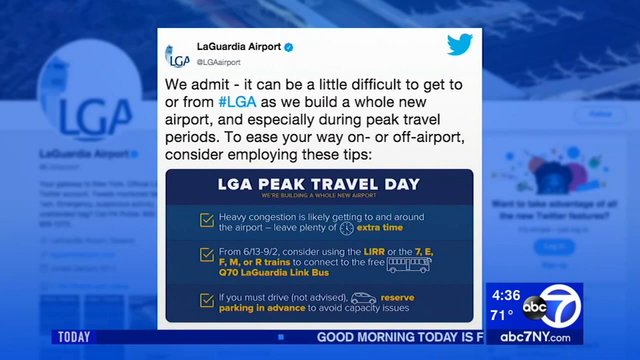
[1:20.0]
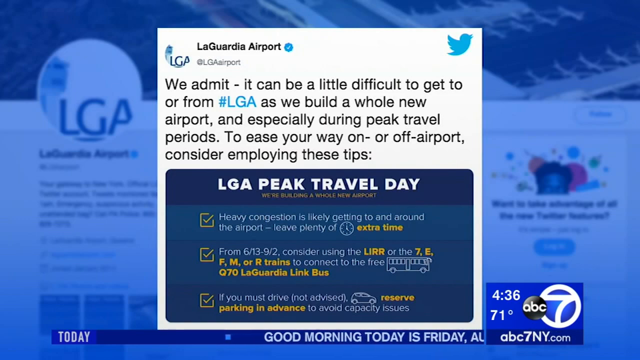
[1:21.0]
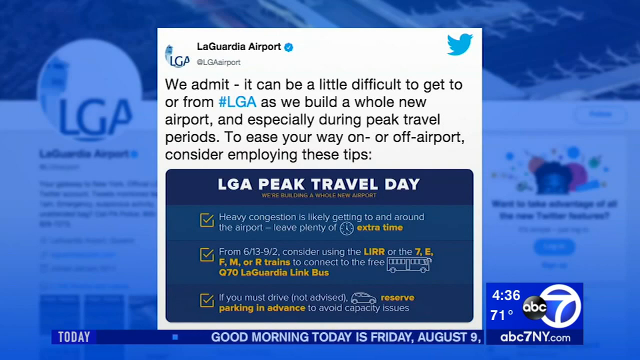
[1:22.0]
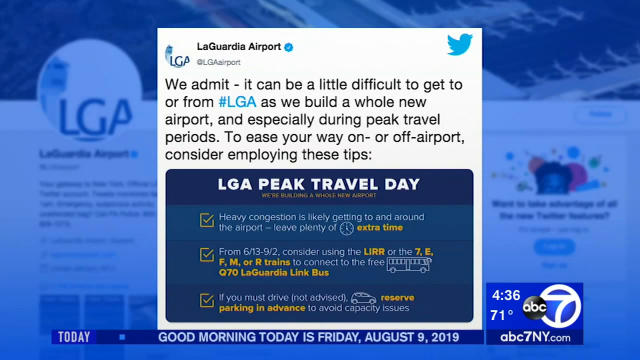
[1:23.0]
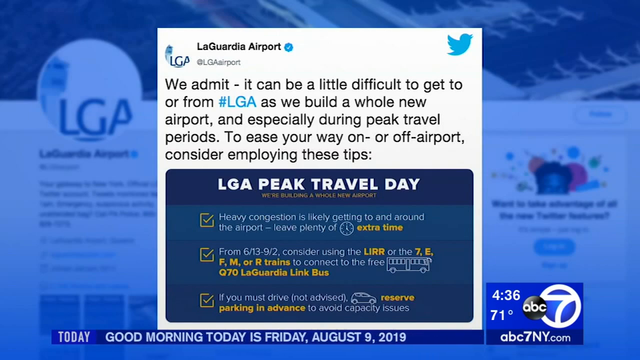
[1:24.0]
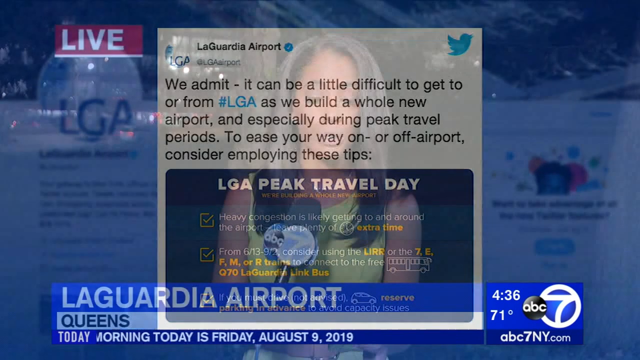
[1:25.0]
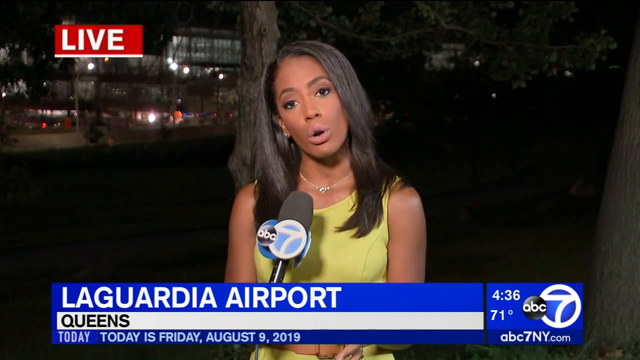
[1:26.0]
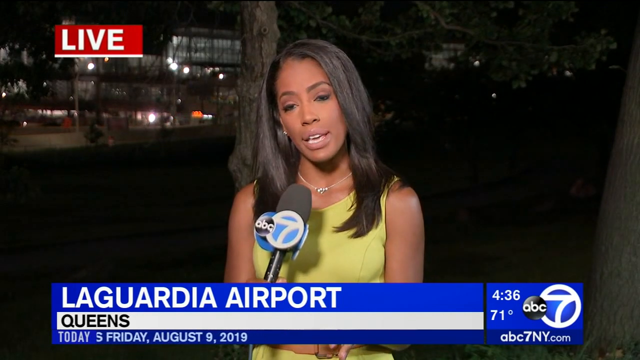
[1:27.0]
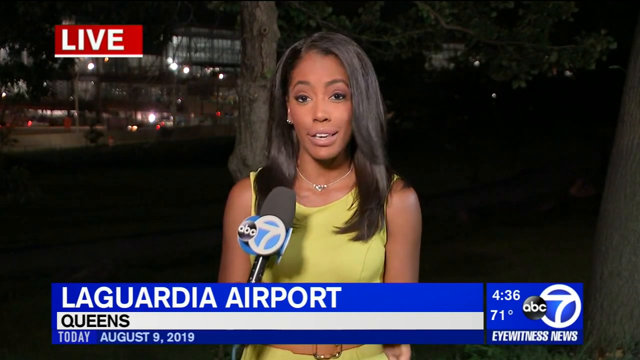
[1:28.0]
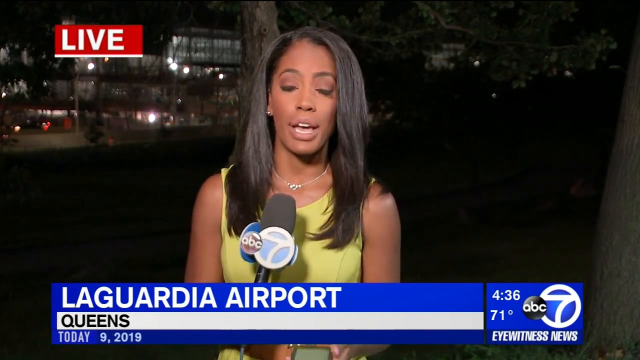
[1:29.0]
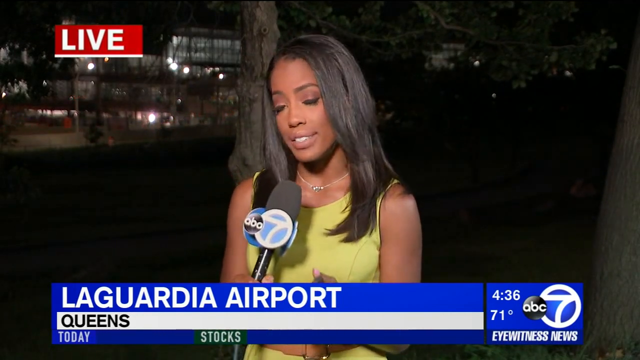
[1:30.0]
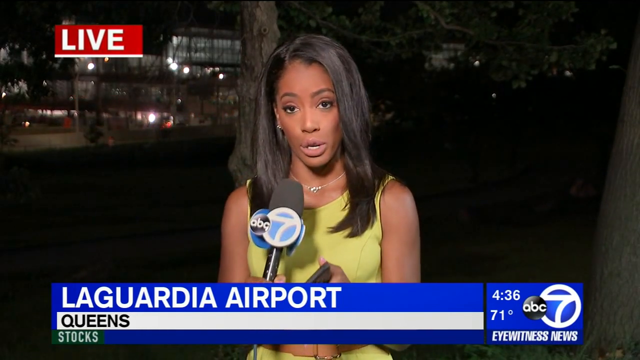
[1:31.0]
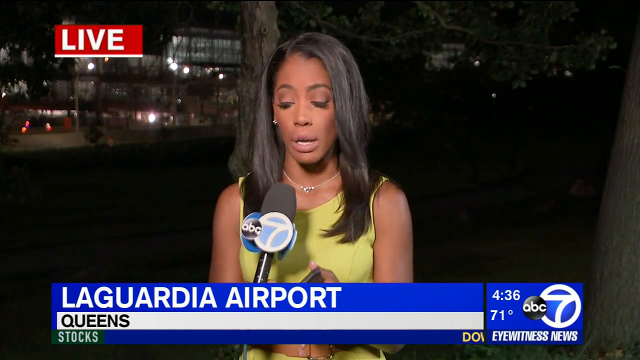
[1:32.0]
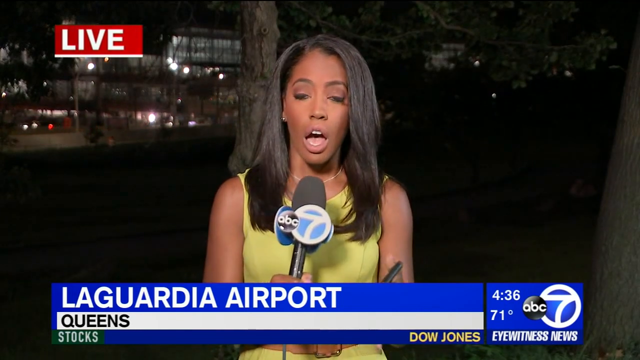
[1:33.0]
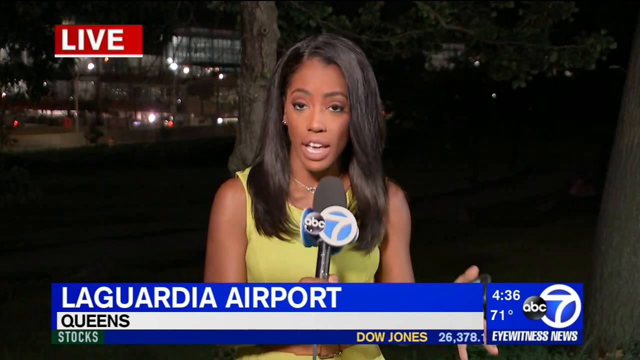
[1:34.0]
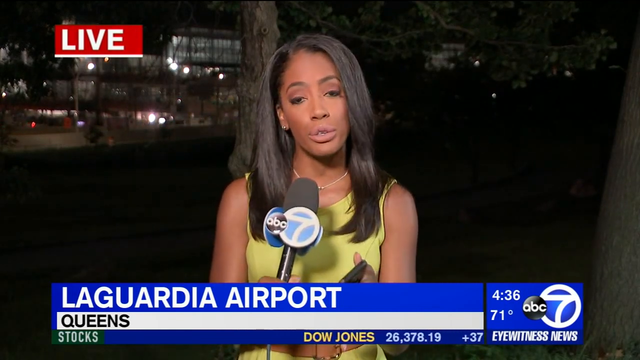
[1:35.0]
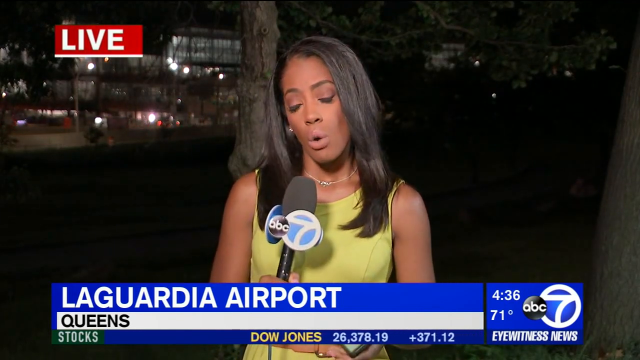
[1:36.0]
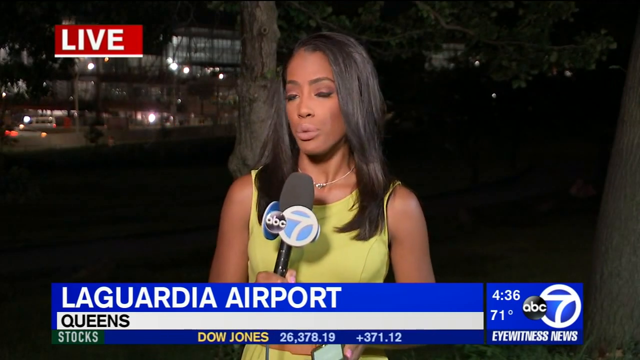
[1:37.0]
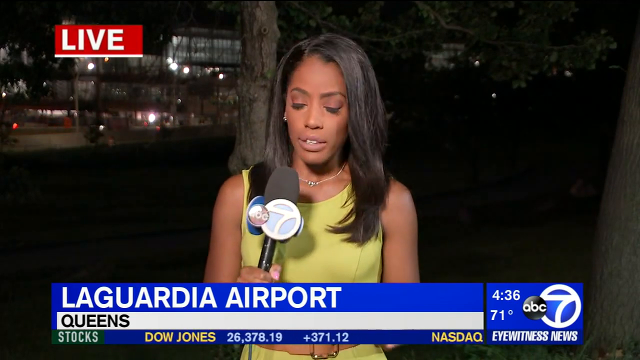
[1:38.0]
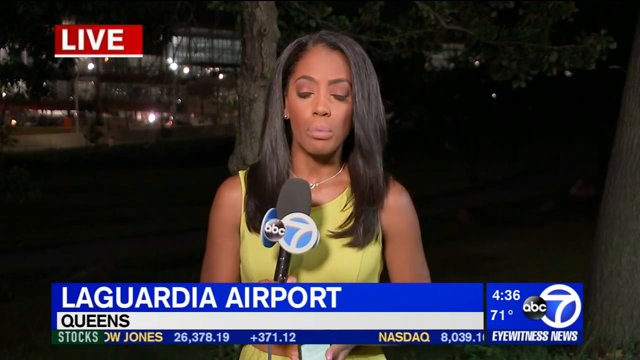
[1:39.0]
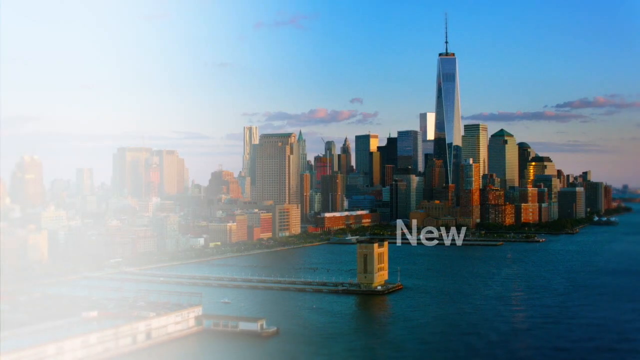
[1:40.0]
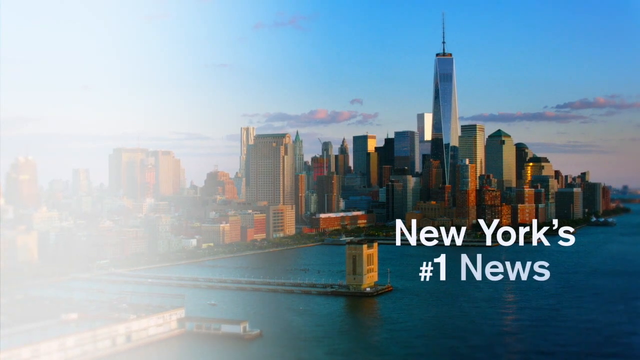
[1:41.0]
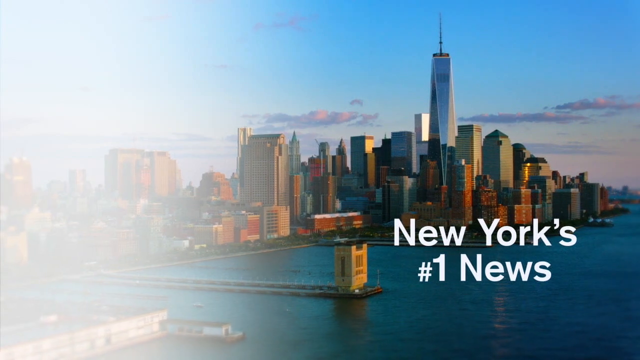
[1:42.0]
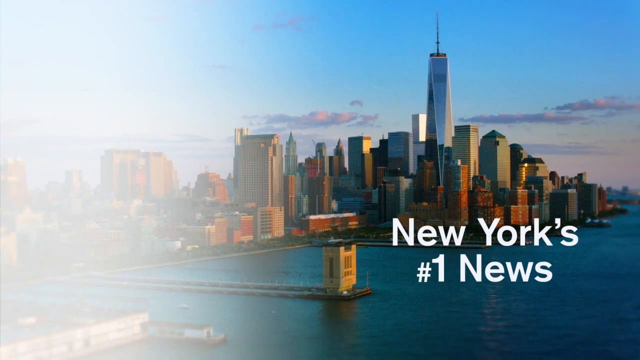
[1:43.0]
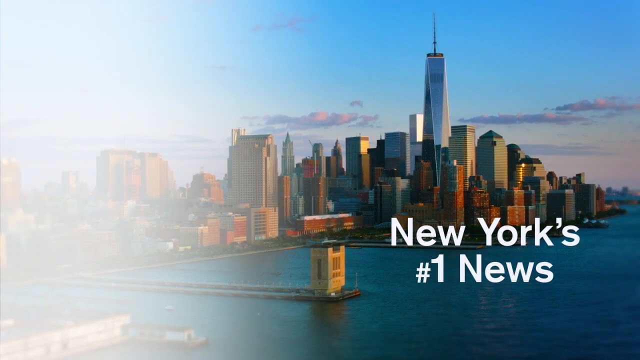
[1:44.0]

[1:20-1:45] The text about getting to or from #LGA remains on screen. Then a lady in a yellow dress appears, wearing a necklace, her hair reaching her shoulders, holding an ABC microphone. Traffic is on the road, and the report seems to be live from ABC Eyewitness News. After that, "New York's number one news" appears, with buildings surrounded by water that seems to be a sea.